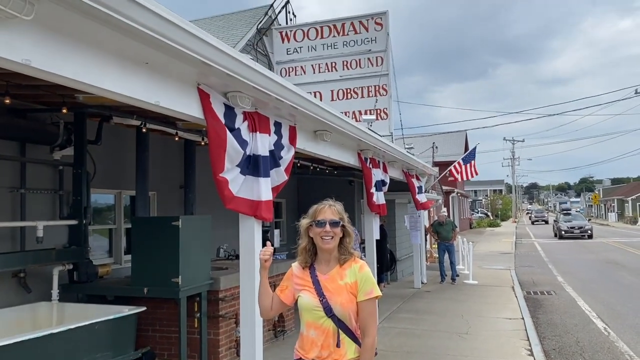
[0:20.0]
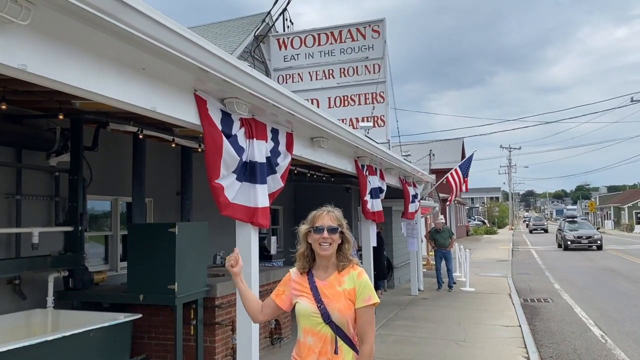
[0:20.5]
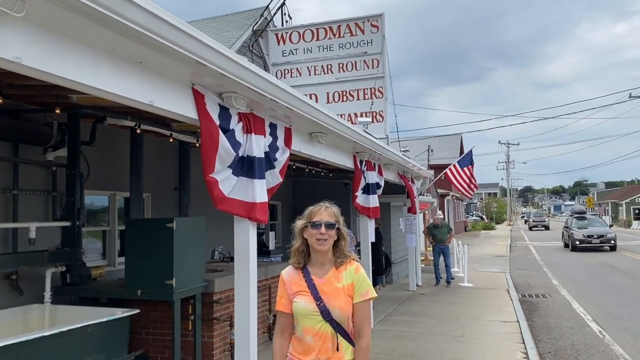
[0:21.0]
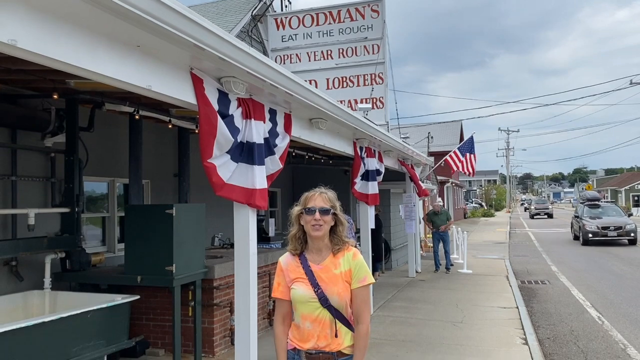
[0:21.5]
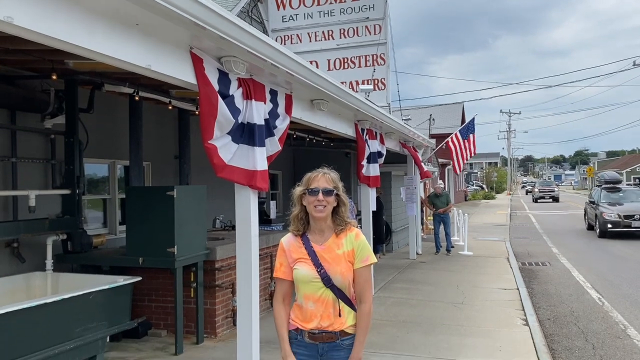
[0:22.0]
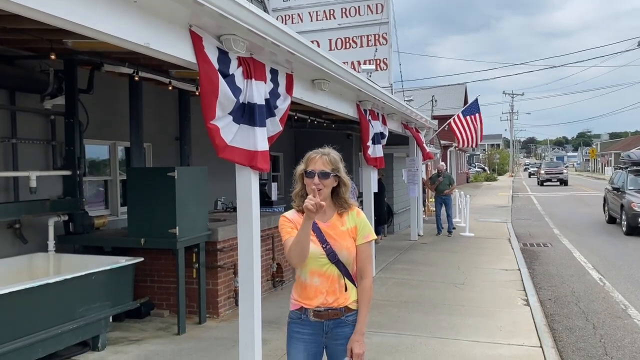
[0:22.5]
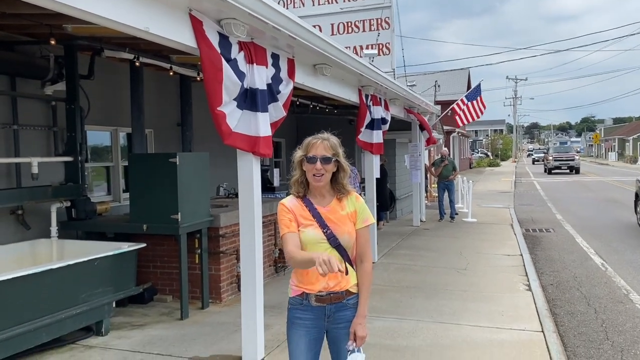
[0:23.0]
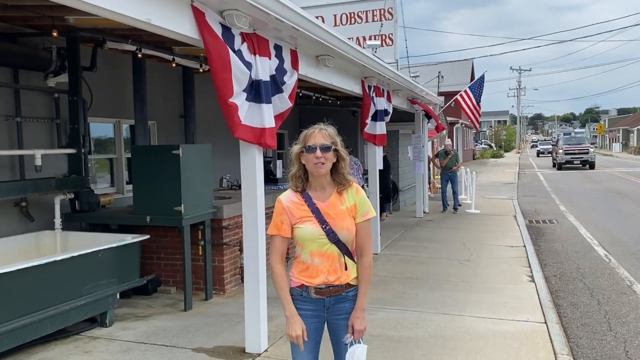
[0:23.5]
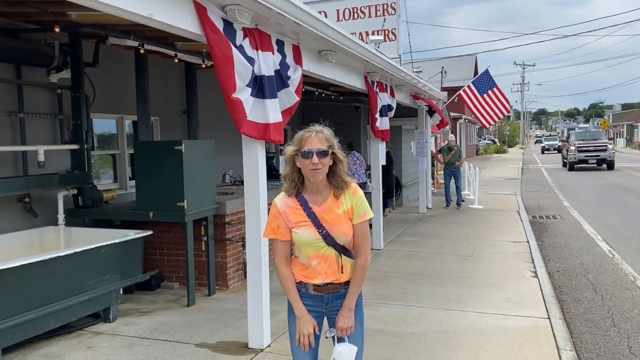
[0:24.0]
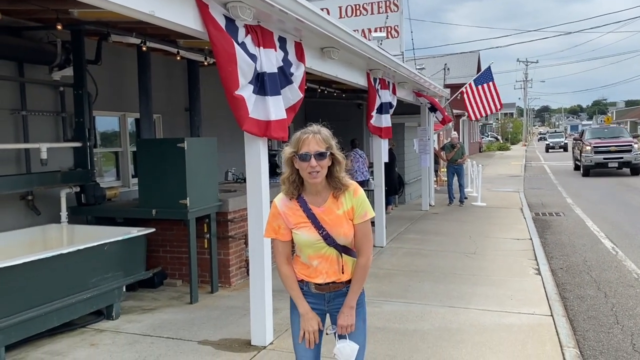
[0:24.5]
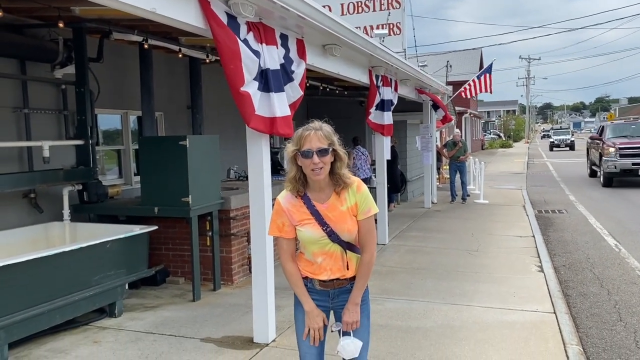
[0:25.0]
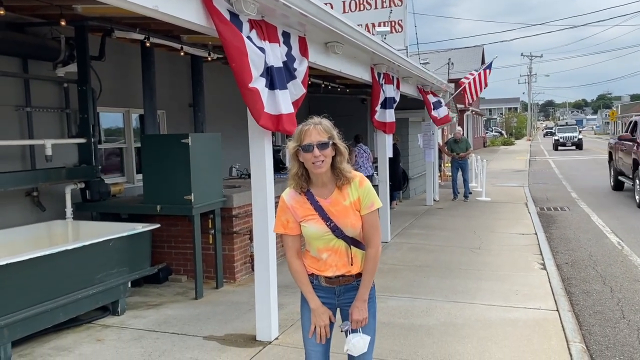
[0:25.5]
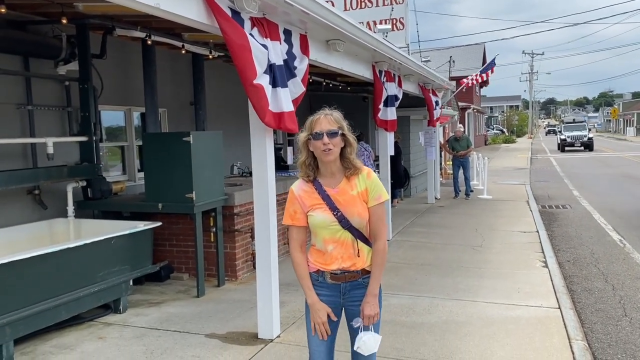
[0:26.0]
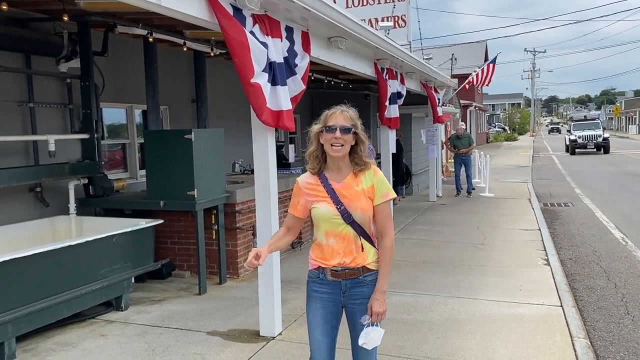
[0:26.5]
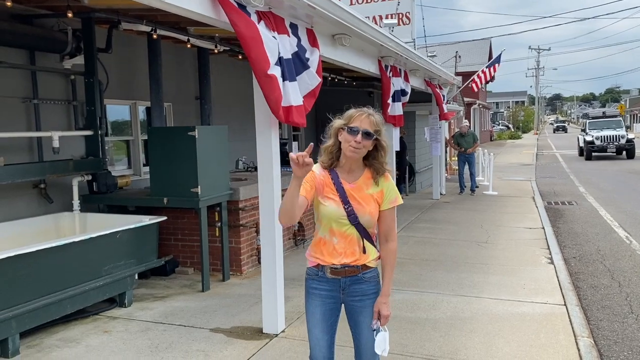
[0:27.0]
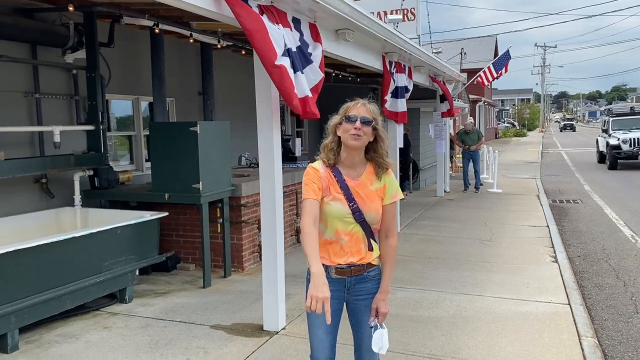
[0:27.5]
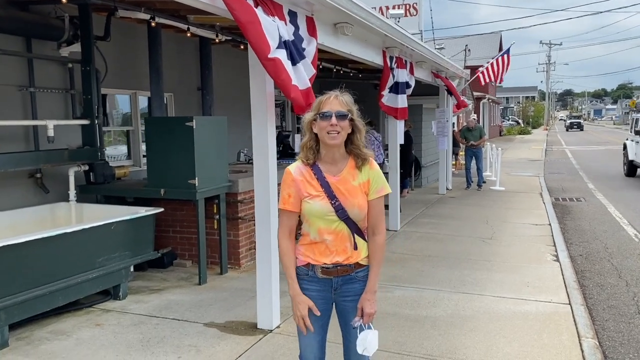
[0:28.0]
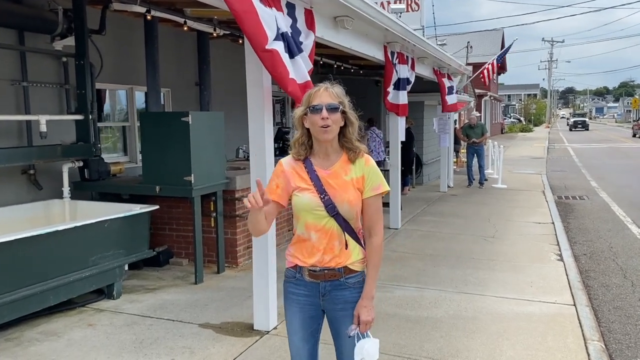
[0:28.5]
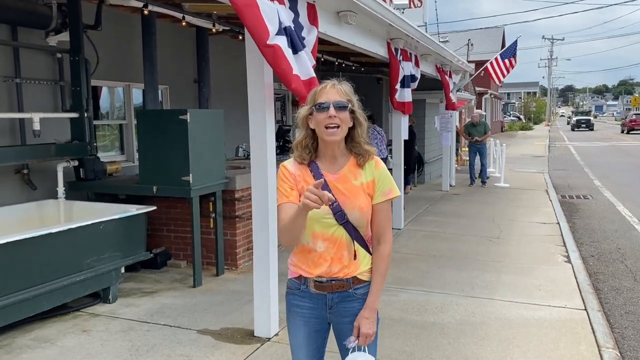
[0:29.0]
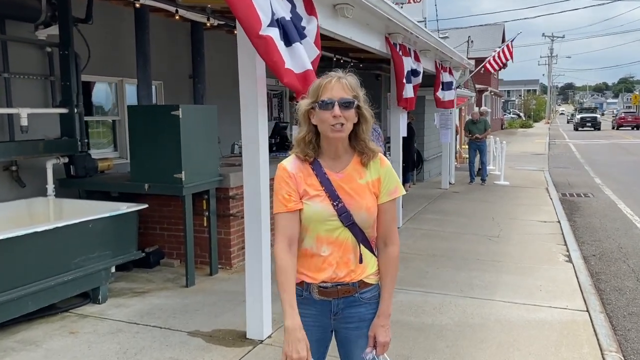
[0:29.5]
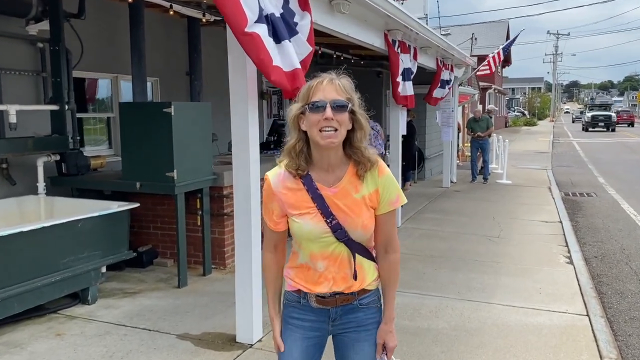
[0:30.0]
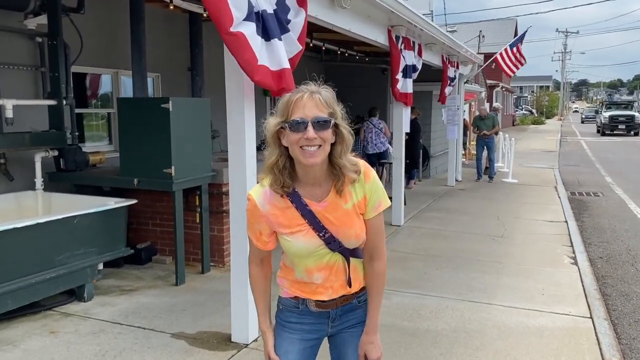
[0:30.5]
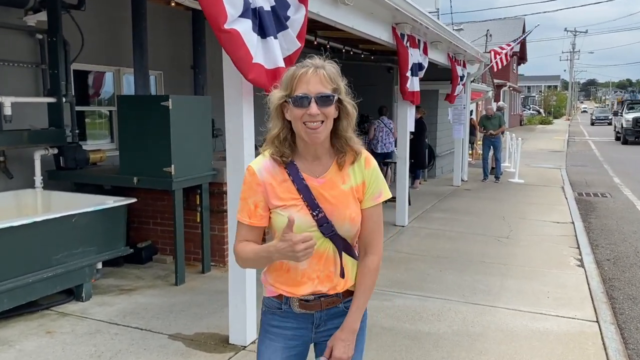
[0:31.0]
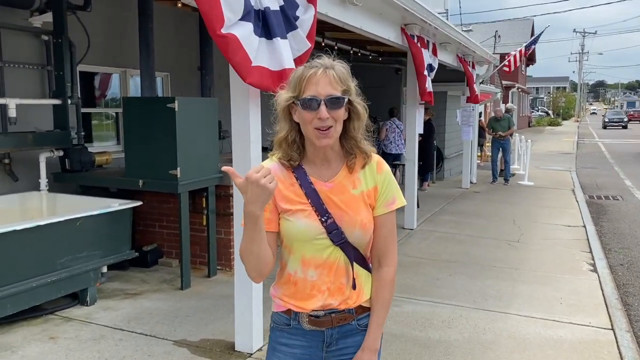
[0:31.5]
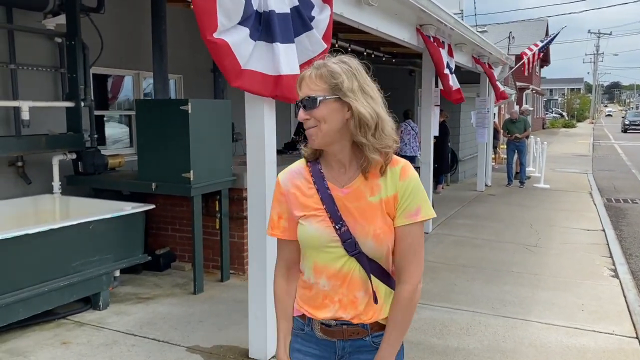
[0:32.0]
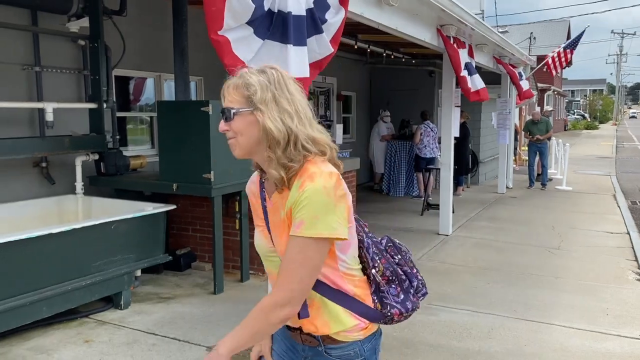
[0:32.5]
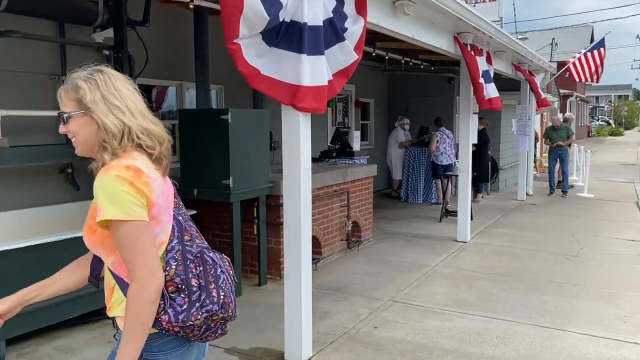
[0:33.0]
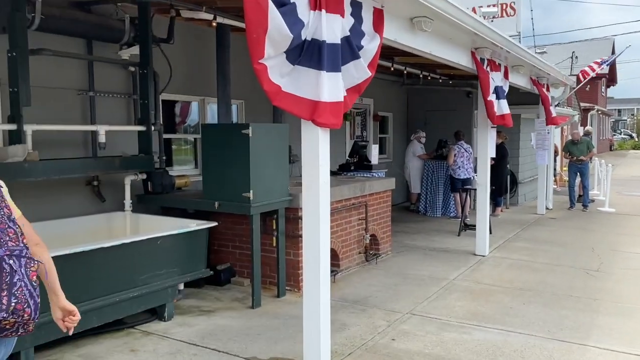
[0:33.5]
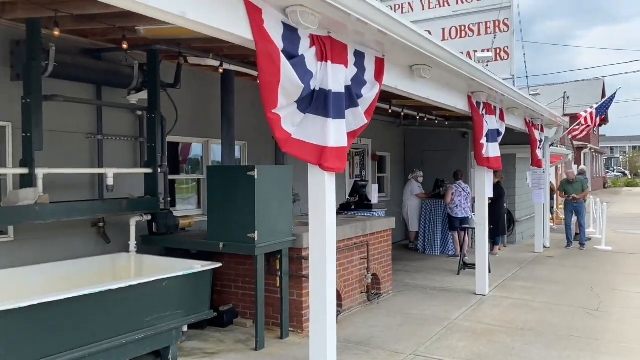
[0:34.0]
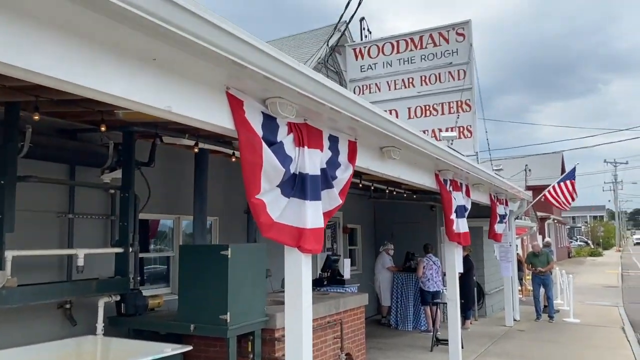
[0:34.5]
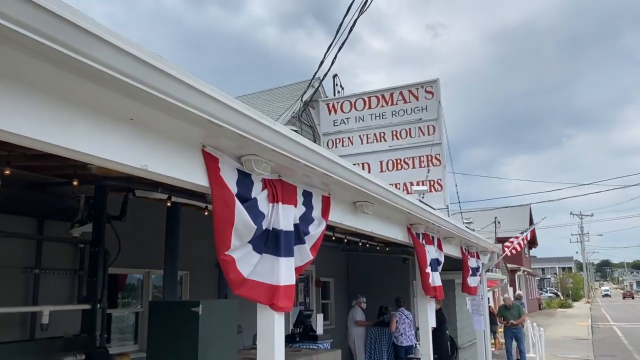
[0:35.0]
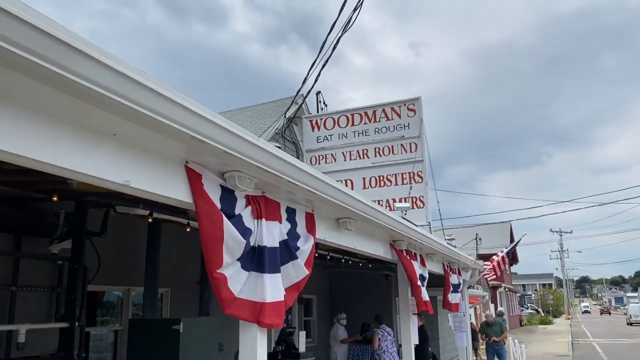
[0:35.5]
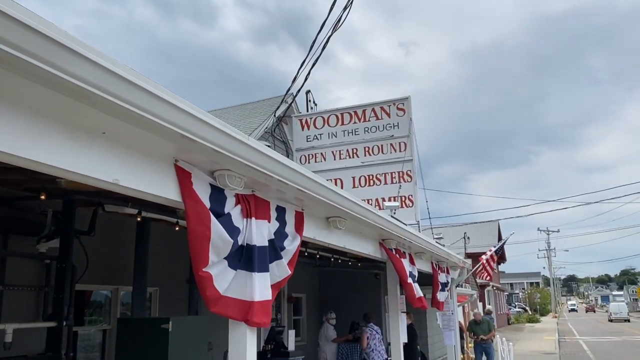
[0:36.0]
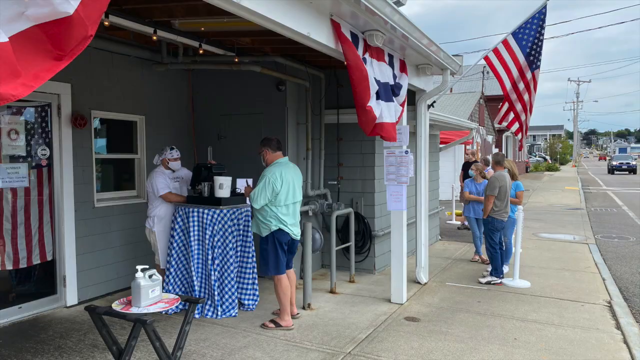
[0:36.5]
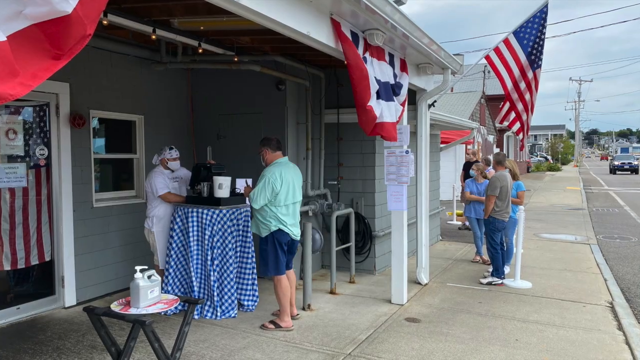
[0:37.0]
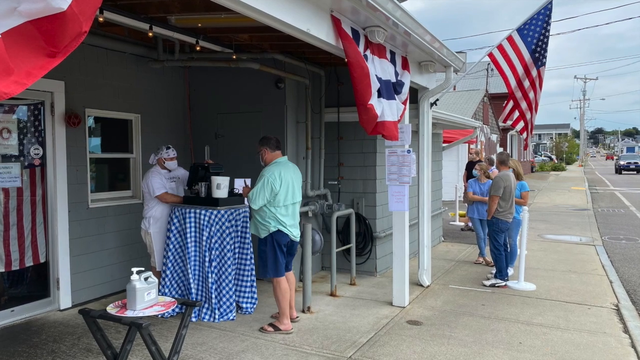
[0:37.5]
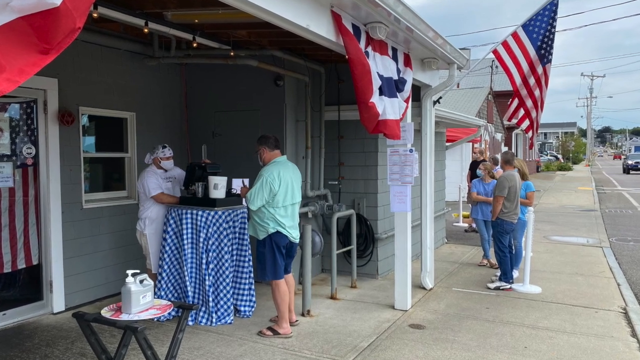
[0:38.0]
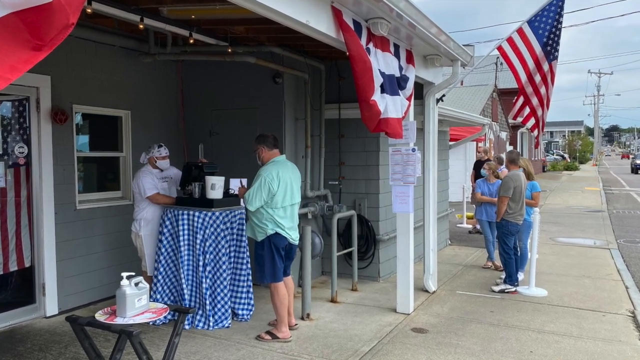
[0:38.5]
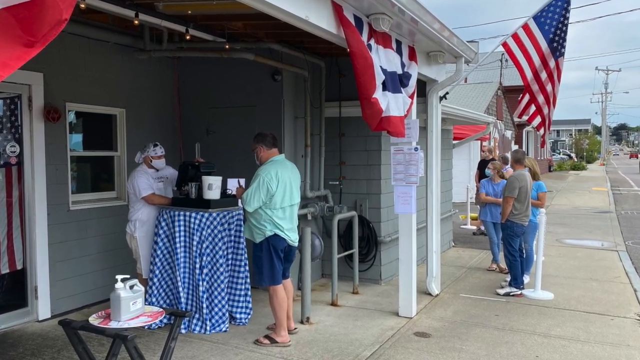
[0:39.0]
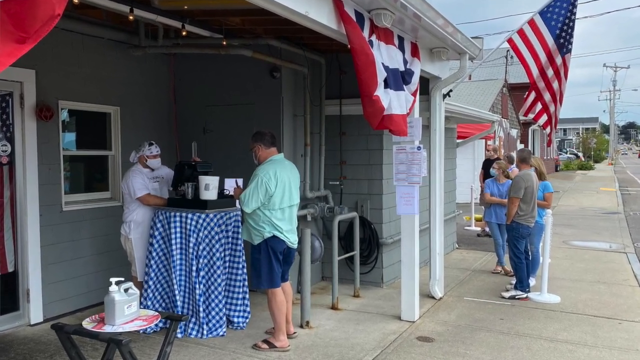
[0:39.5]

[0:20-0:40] Outside the strip mall, the restaurant's sign is visible: a white sign with red writing that says "Woodman's", with smaller lettering. The next small sign says "open year round", and the edge of another sign says something about lobsters. The woman points to the sign and continues talking. She points at the camera, leans in towards it and points at it a couple of times more, quite animated. She turns, wearing a bluish bag, and walks into the restaurant. The video cuts to the same area where she was standing, where there is a round, bar-height table with a blue gingham tablecloth. An elderly woman dressed in white, wearing a white face mask, has her back against the building and is eating with a man with brown hair in a pale green shirt and blue shorts. They are standing up, eating at the table, and towards the right side of the screen some people are in a queue below the American flag.